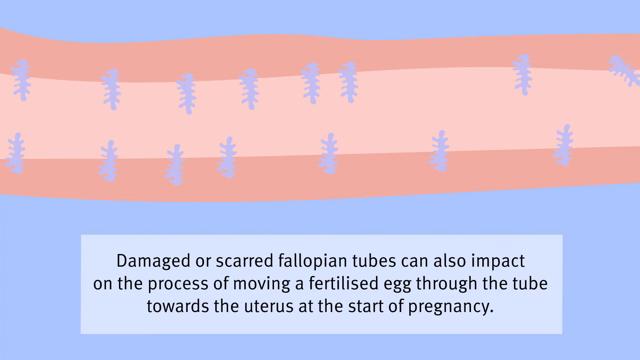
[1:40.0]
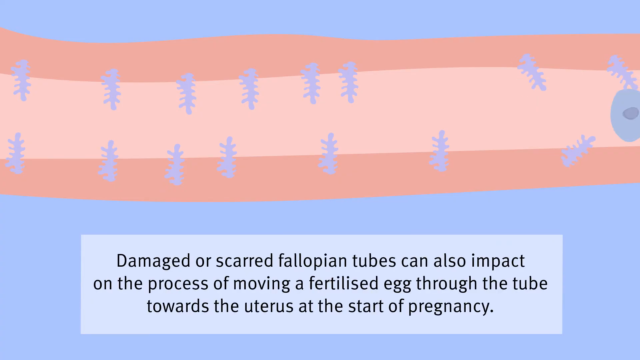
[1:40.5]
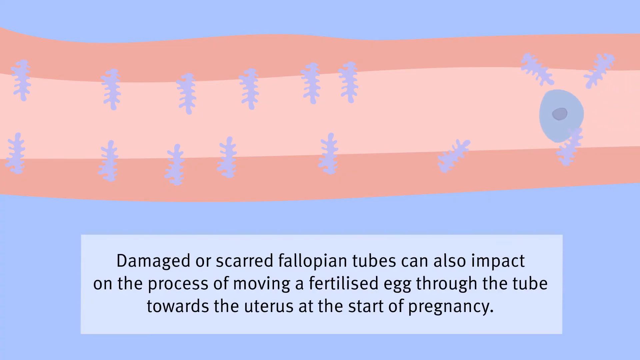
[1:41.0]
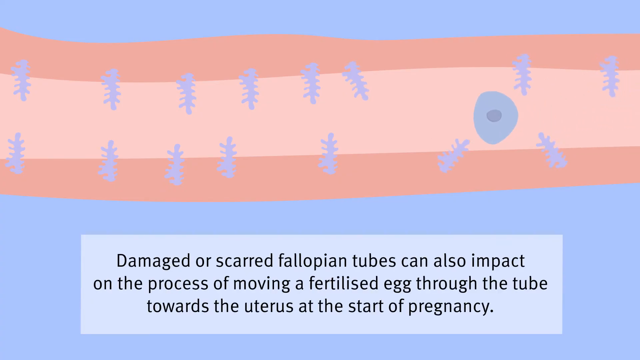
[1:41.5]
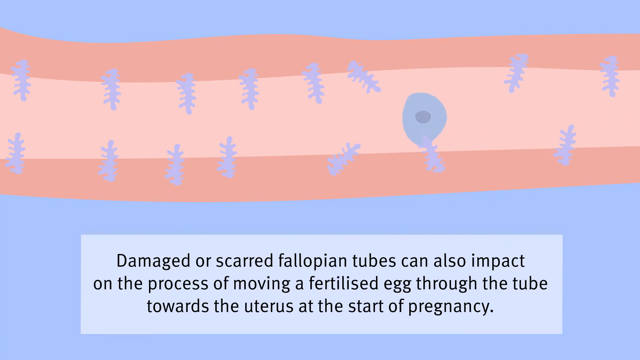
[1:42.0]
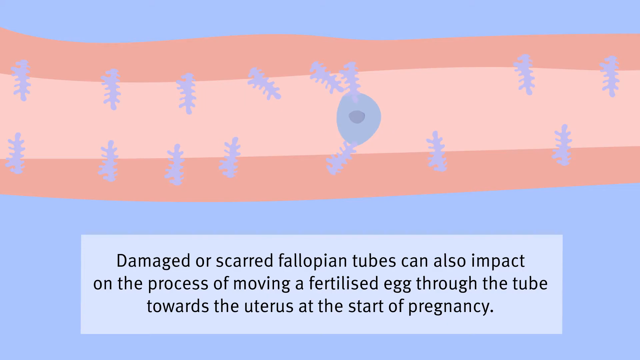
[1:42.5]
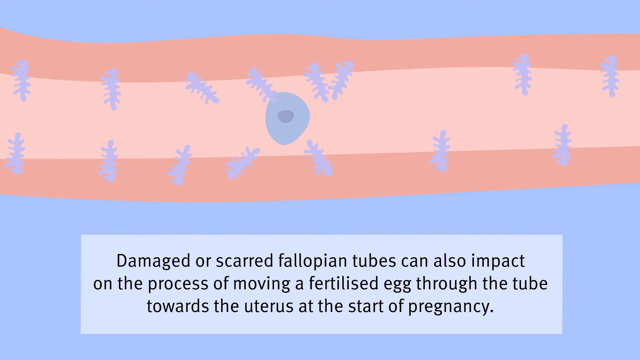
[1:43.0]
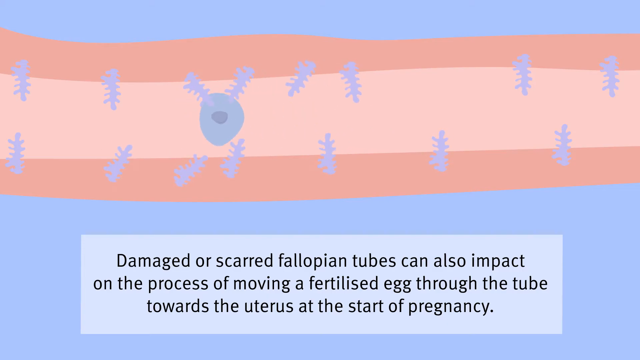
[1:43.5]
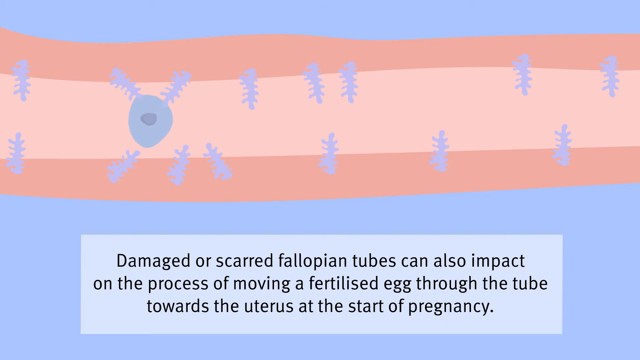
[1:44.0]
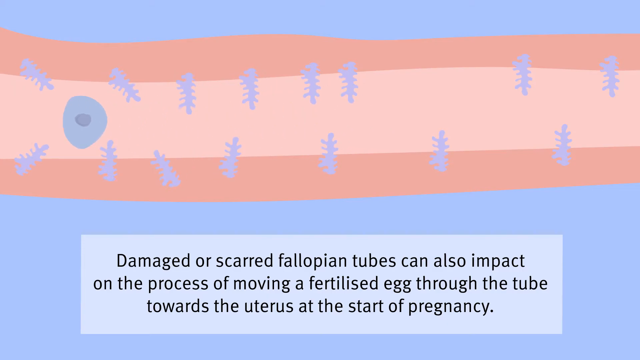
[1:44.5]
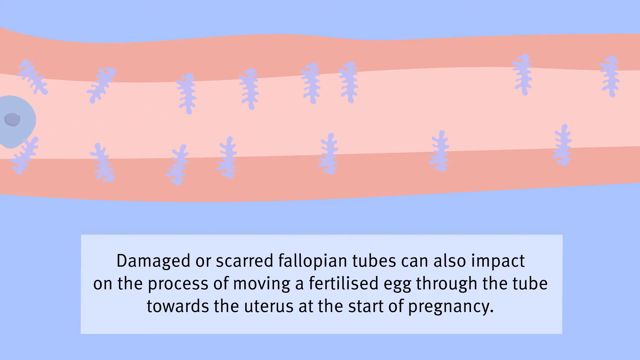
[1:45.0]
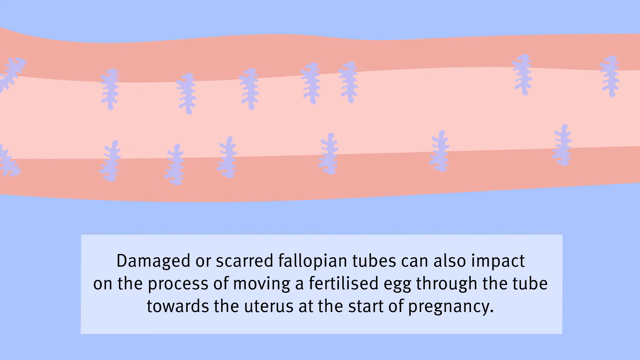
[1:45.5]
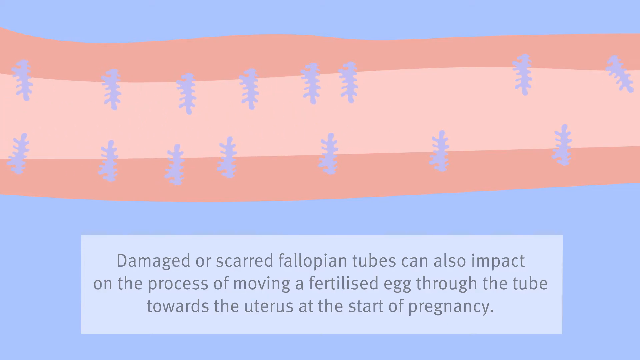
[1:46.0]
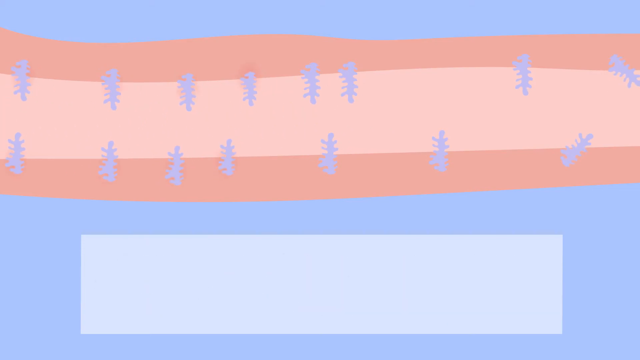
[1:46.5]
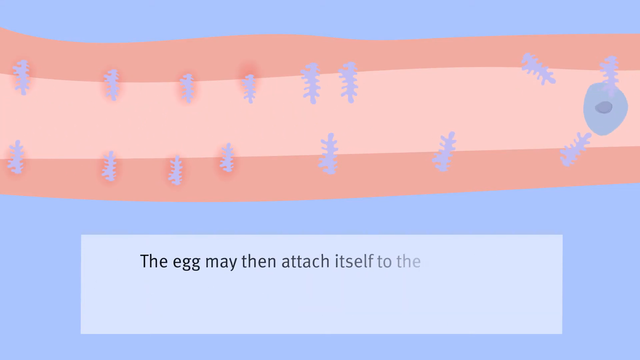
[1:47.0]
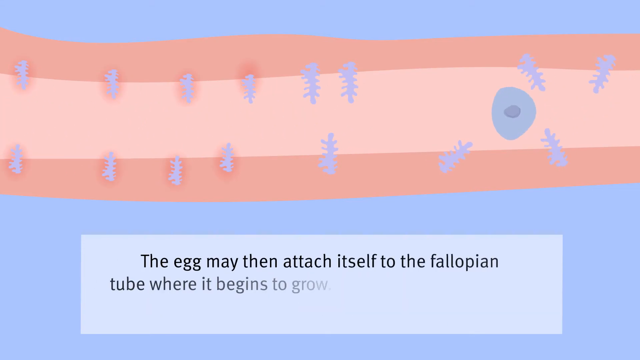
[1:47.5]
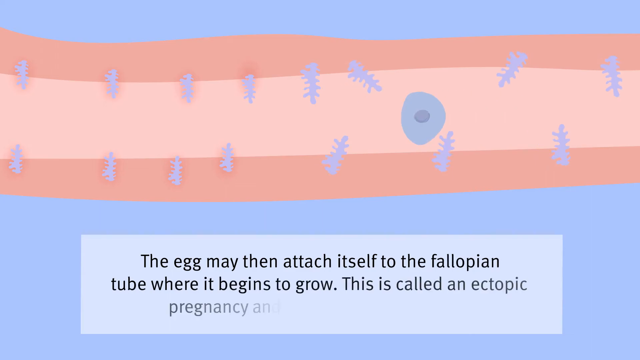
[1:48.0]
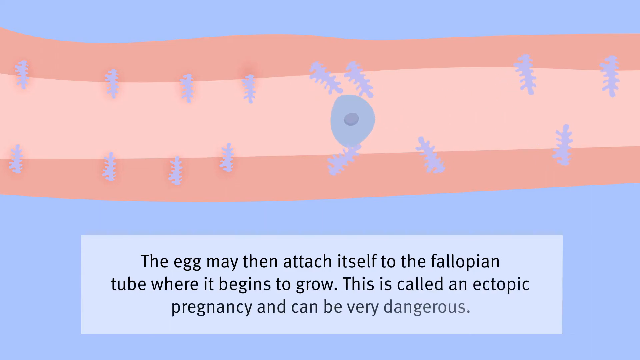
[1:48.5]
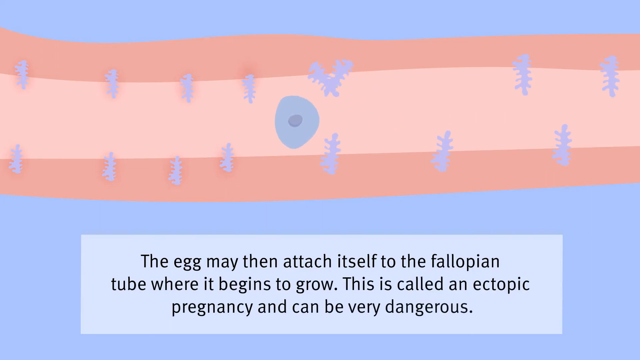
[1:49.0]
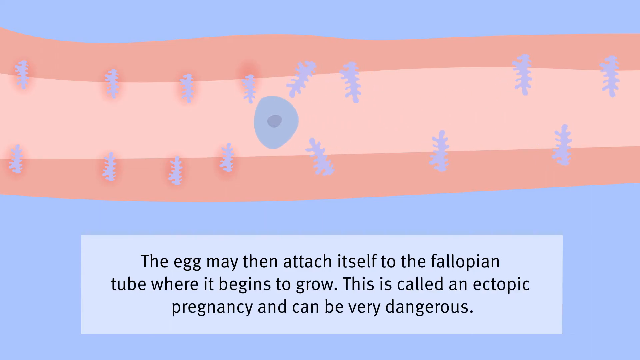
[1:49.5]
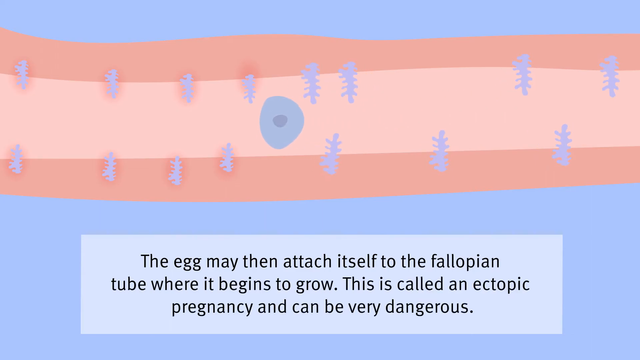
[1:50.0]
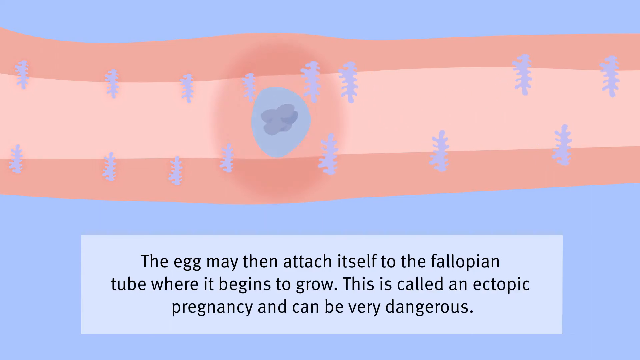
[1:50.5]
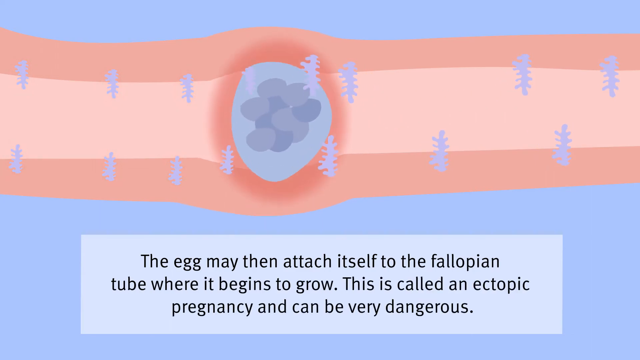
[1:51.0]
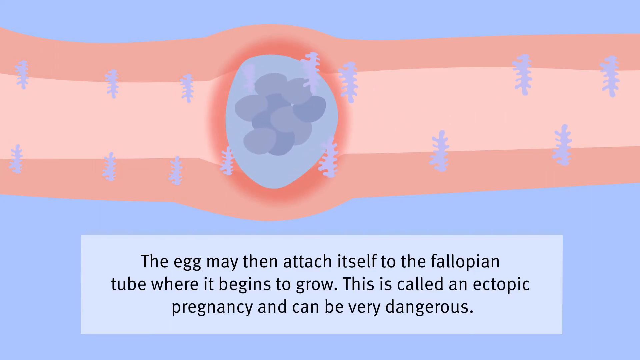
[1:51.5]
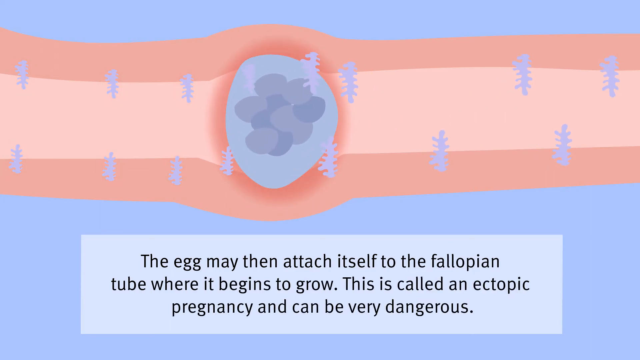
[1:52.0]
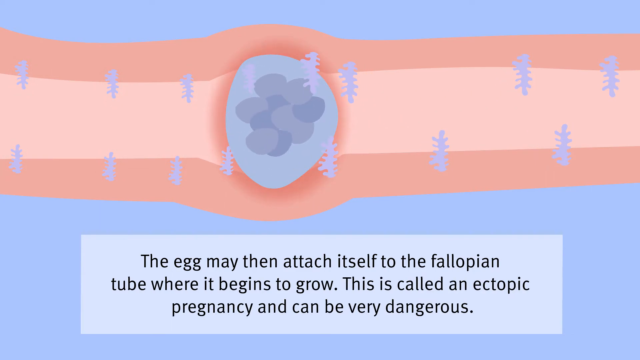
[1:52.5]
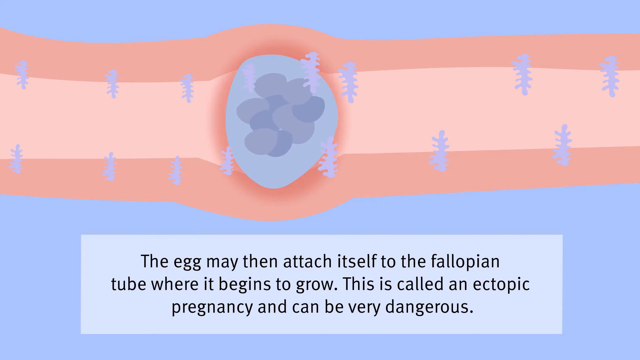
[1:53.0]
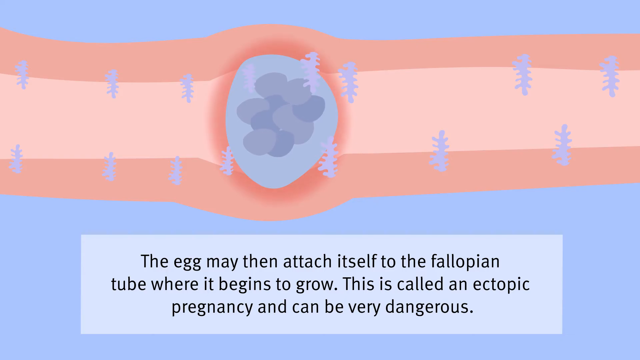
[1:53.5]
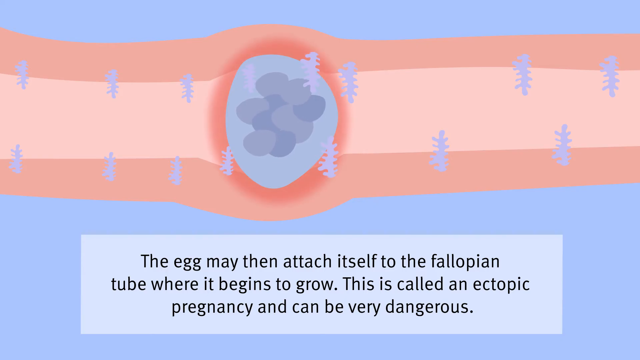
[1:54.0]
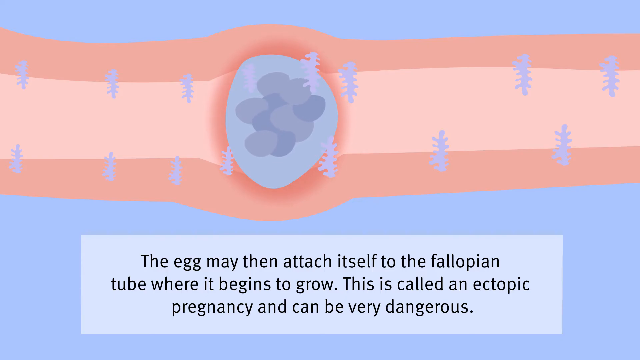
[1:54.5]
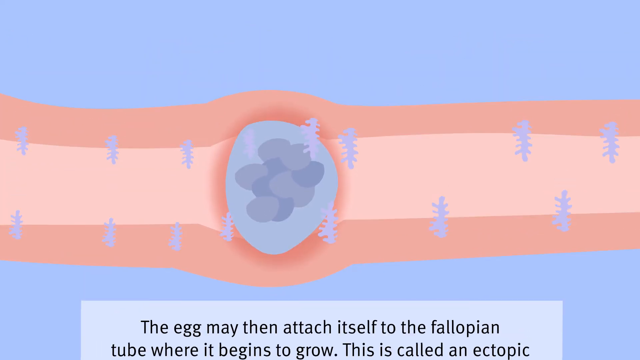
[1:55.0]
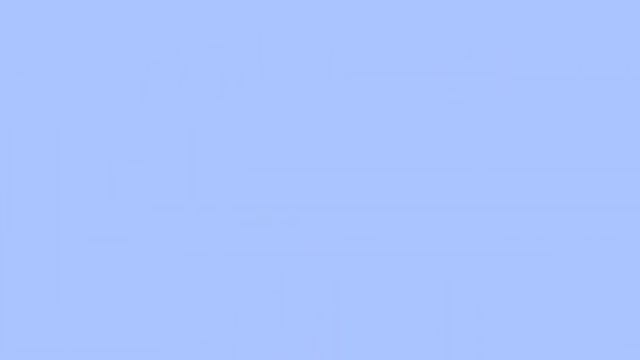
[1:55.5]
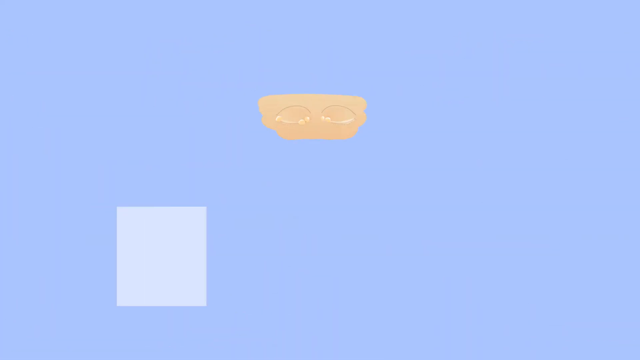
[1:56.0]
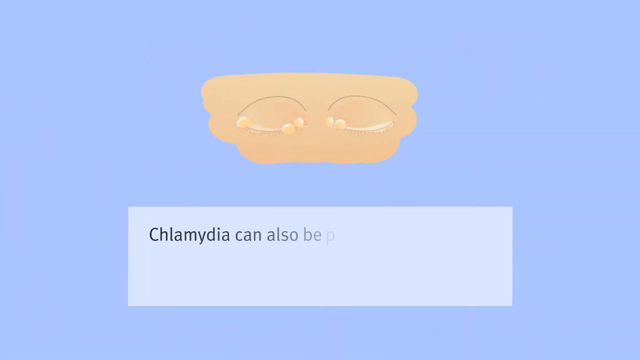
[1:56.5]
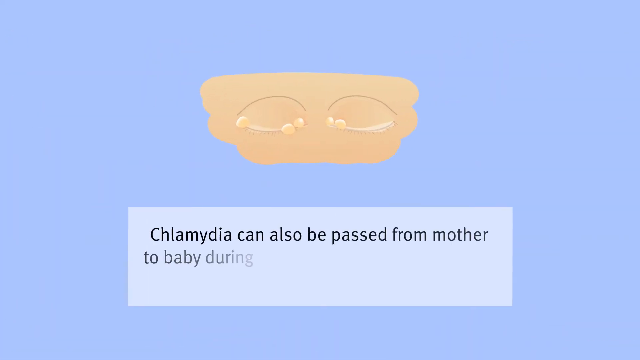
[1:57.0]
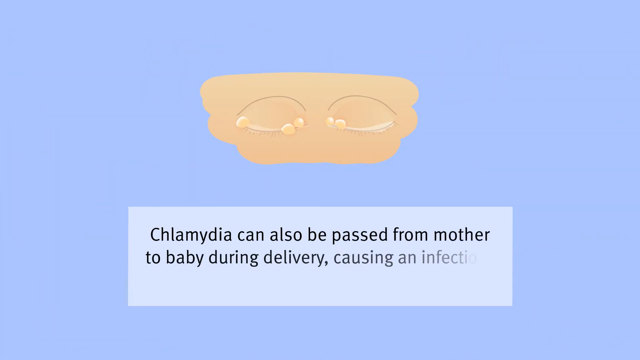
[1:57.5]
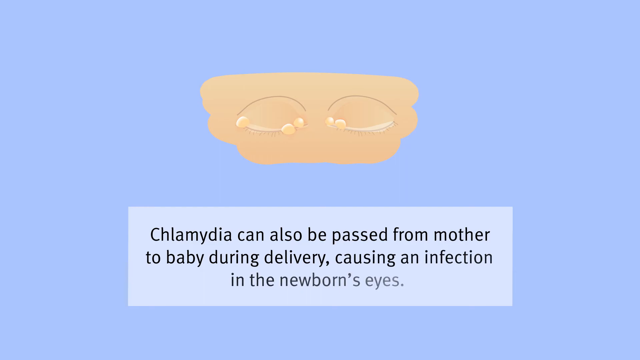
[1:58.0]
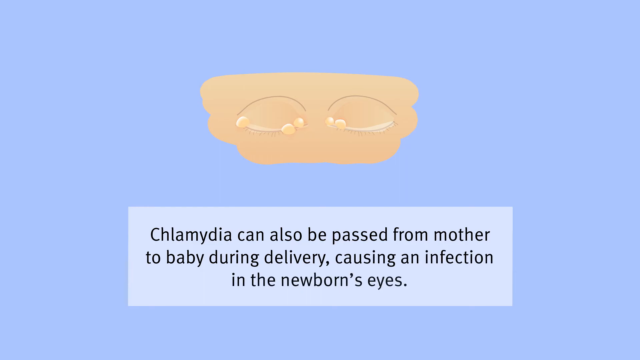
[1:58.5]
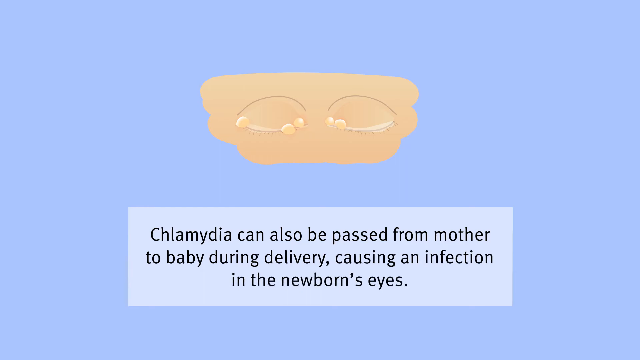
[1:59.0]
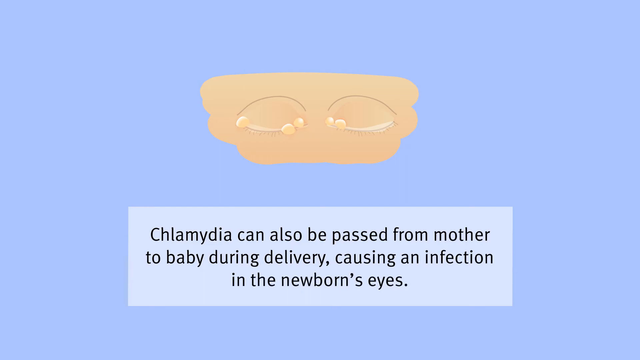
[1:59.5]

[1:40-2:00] On a blue background, a close-up appears, possibly of a fallopian tube, with kind of robin's egg blue things that apparently represent damage or scarring in the fallopian tubes. A text box reads "damaged or scarred fallopian tubes can also impact on the process of moving a fertilized egg through the tube toward the uterus at the start of a pregnancy." Eggs are shown trying to get through, with a lot of scarring in the way, and they get stuck. One grows into a gigantic ball with little bubbles inside, and text reads "the egg may then attach itself to the fallopian tube where it begins to grow. This is called an ectopic pregnancy and can be very dangerous."